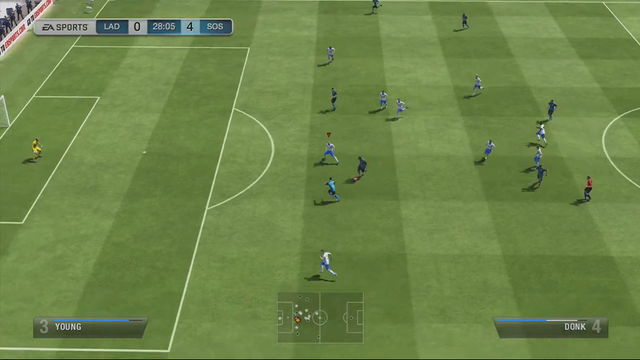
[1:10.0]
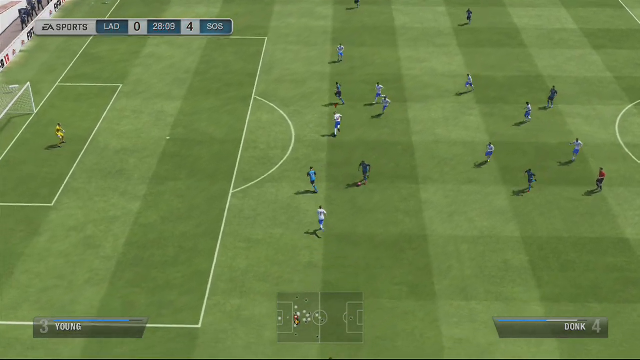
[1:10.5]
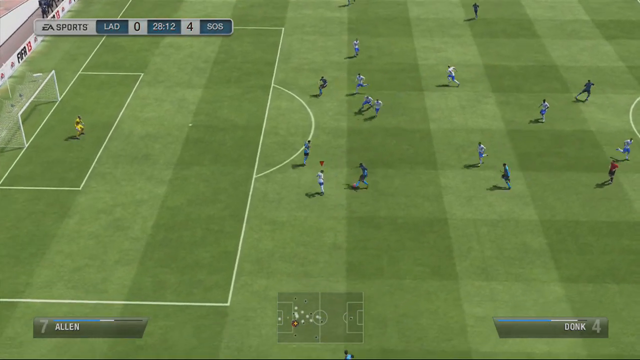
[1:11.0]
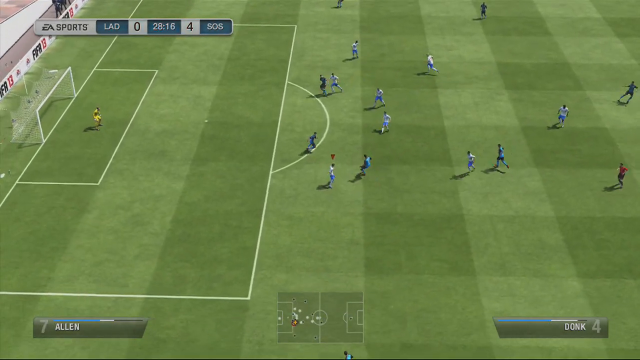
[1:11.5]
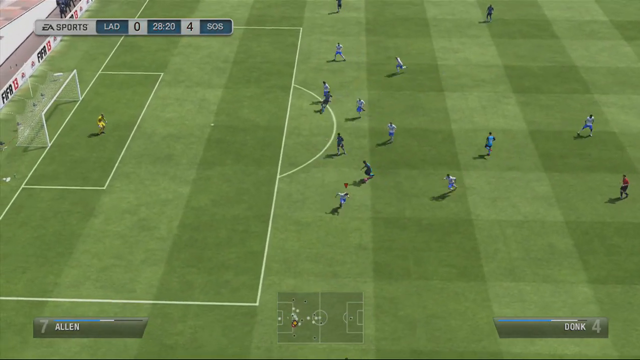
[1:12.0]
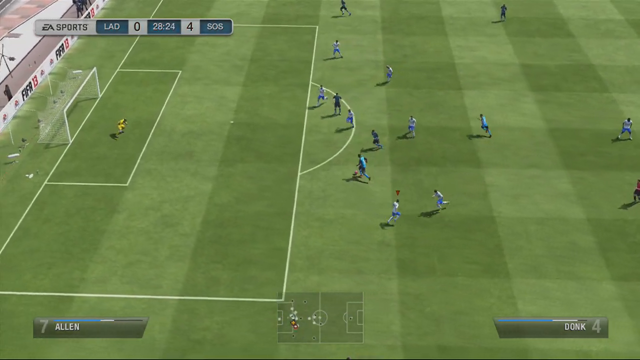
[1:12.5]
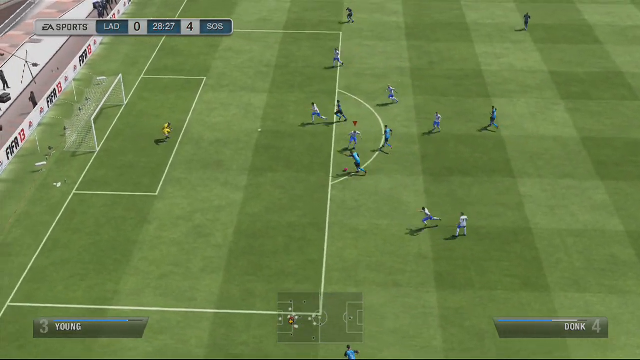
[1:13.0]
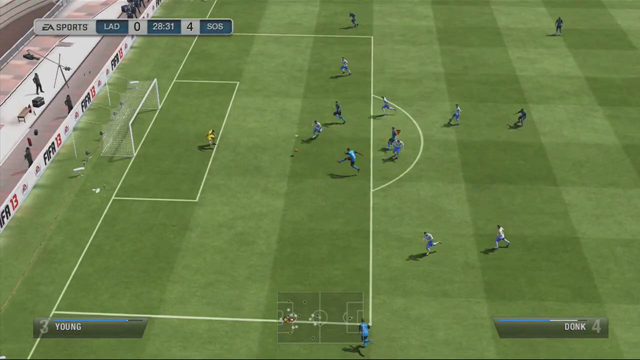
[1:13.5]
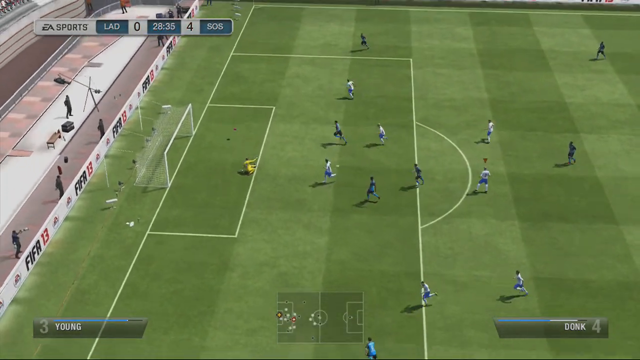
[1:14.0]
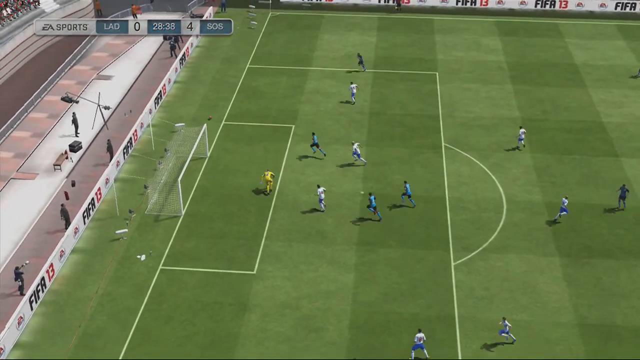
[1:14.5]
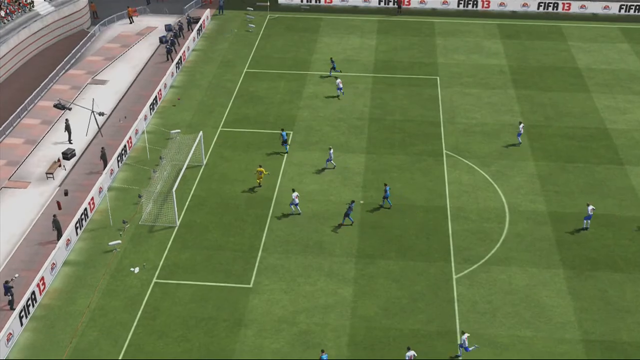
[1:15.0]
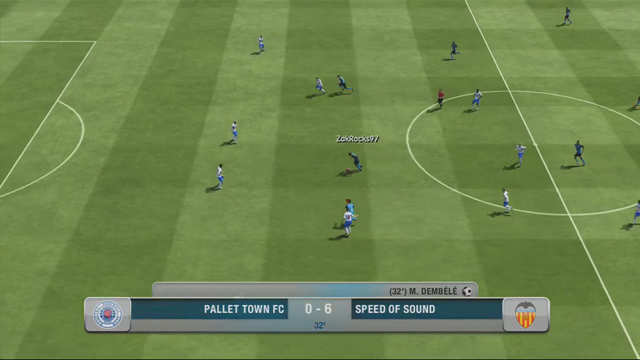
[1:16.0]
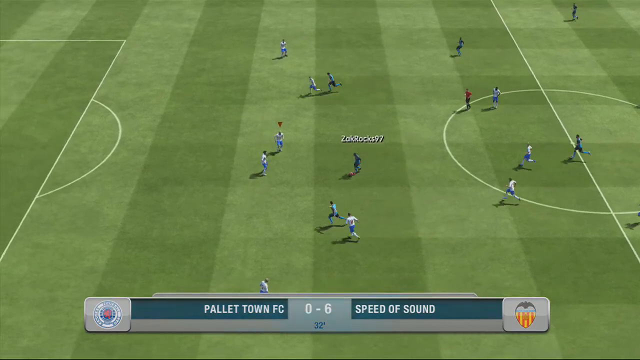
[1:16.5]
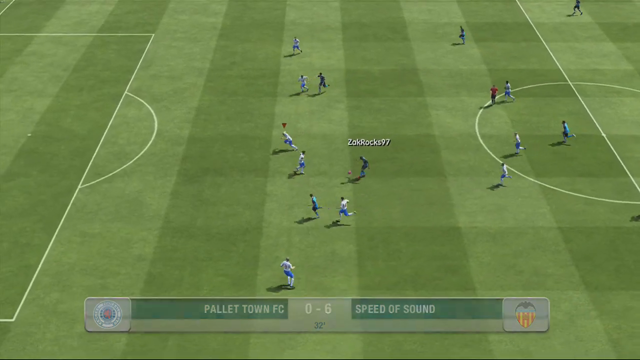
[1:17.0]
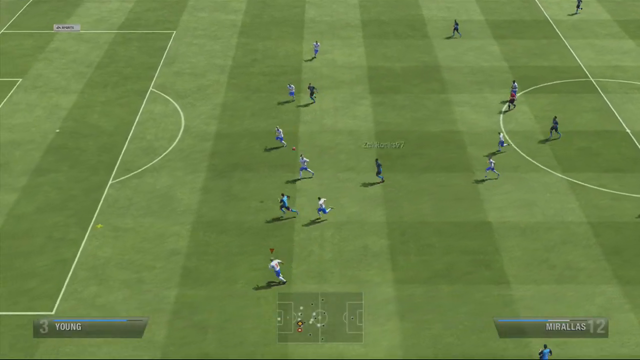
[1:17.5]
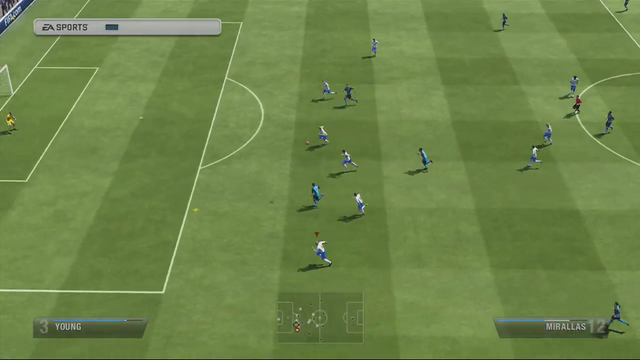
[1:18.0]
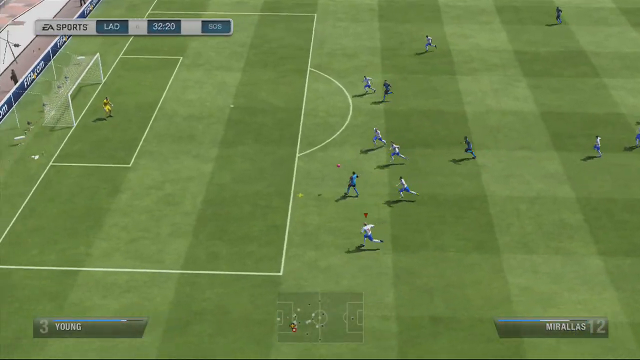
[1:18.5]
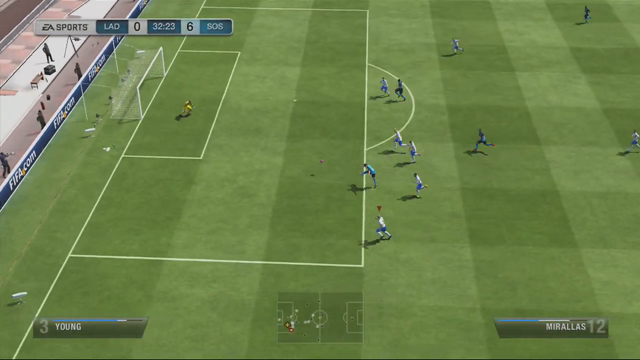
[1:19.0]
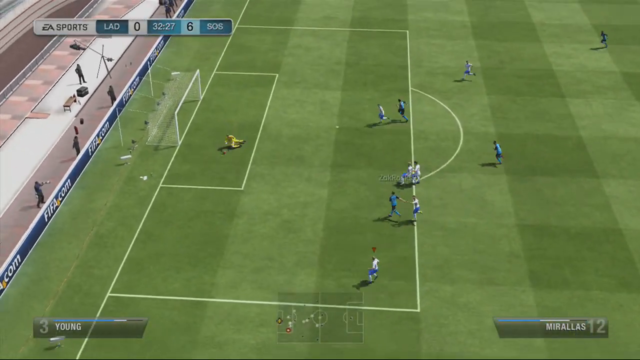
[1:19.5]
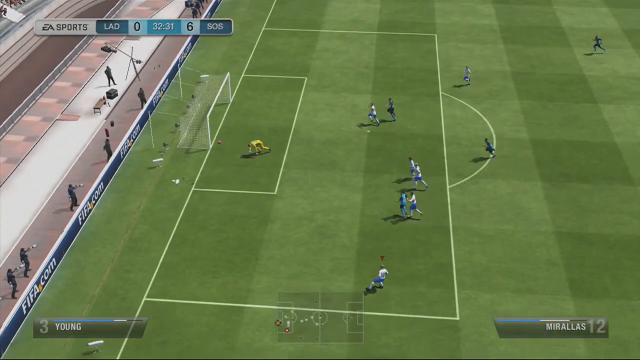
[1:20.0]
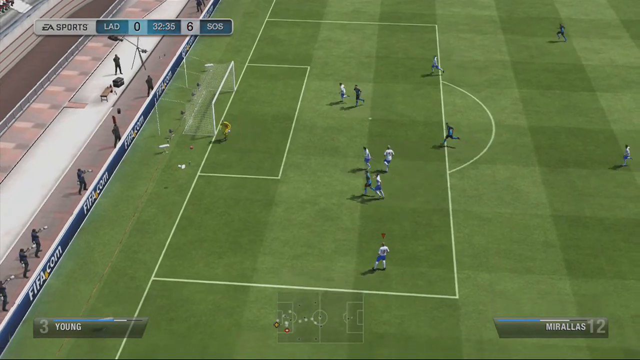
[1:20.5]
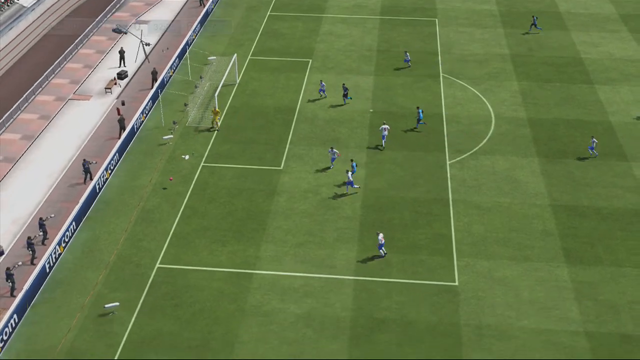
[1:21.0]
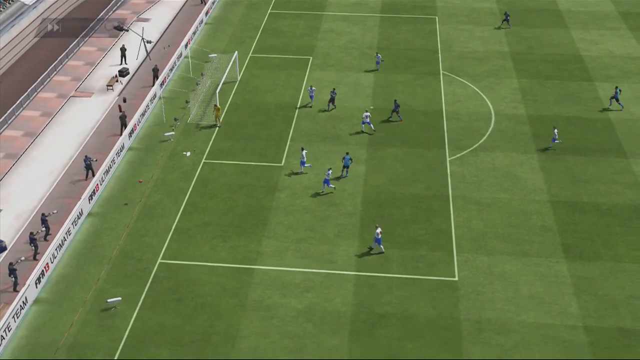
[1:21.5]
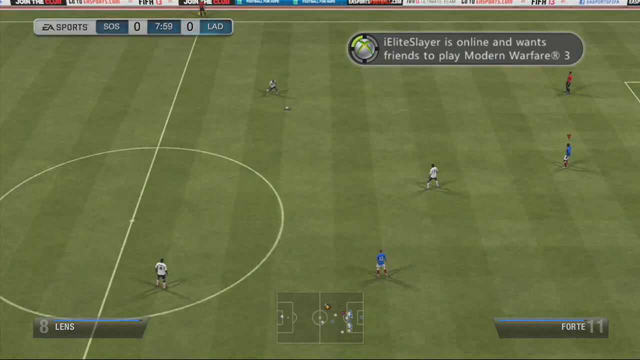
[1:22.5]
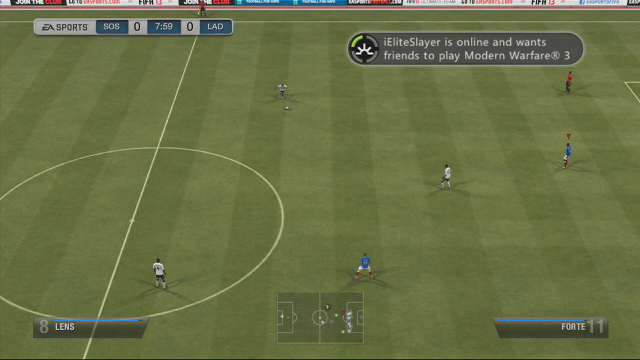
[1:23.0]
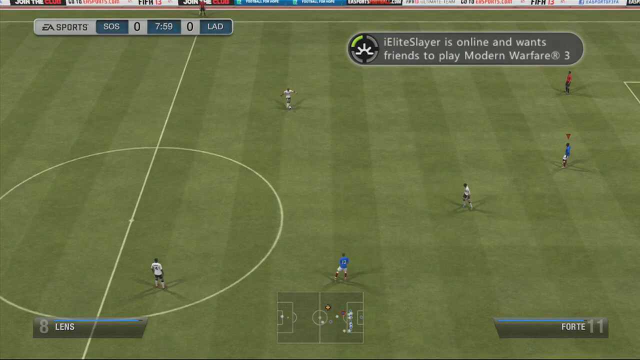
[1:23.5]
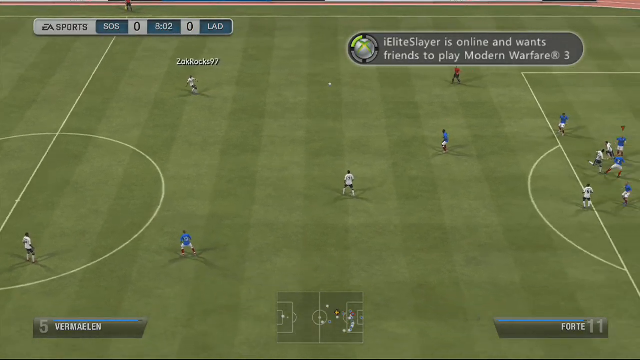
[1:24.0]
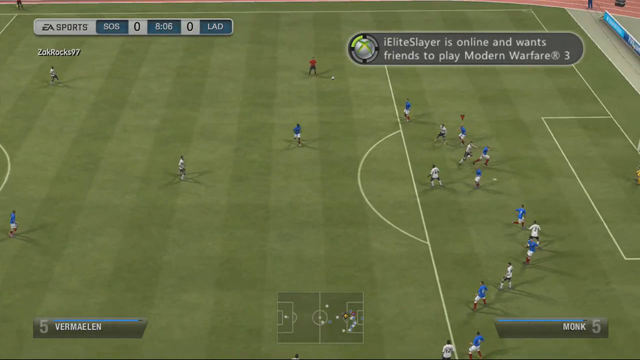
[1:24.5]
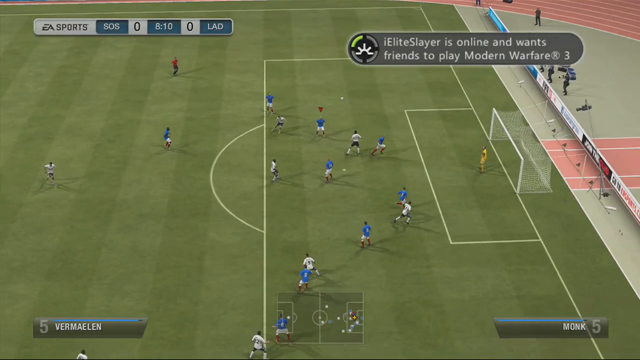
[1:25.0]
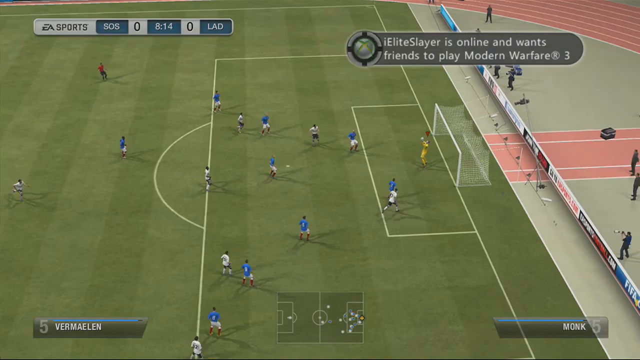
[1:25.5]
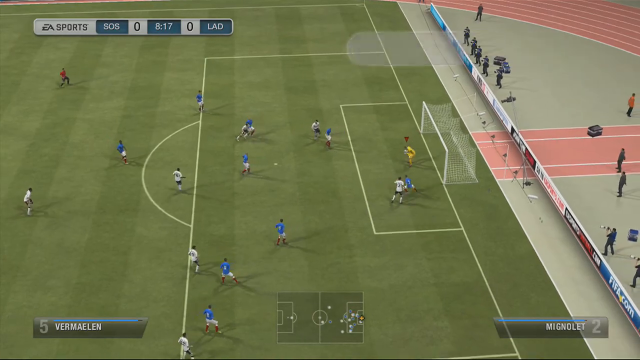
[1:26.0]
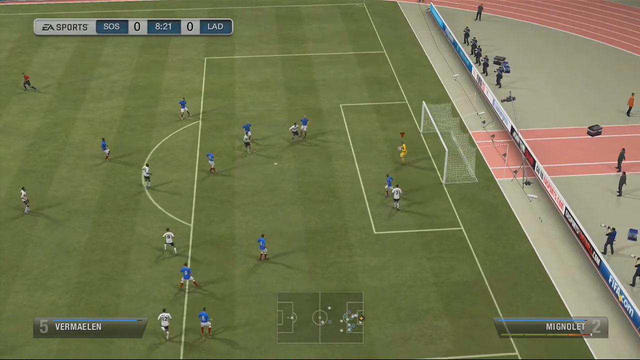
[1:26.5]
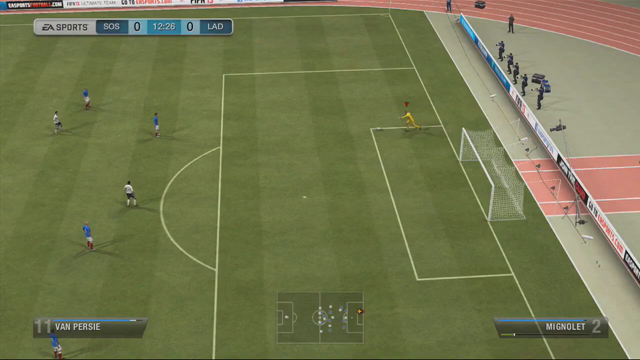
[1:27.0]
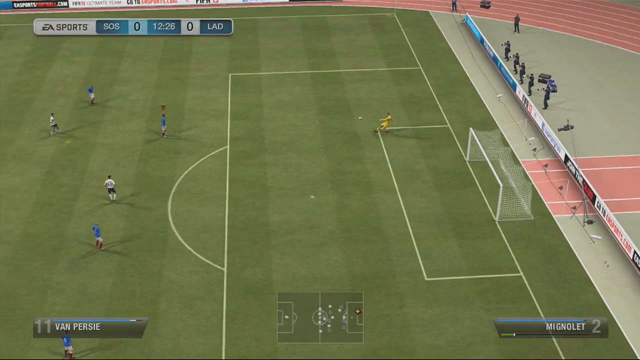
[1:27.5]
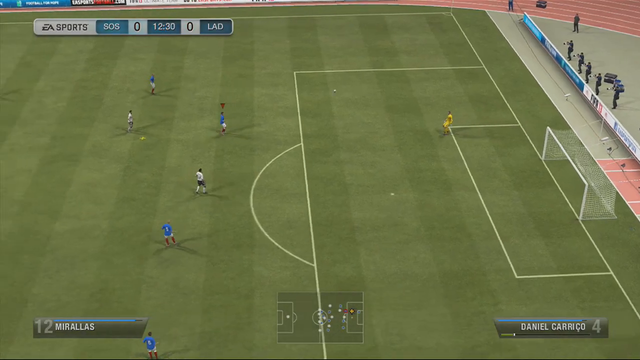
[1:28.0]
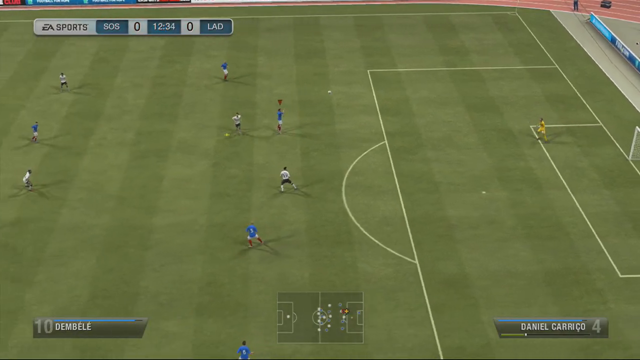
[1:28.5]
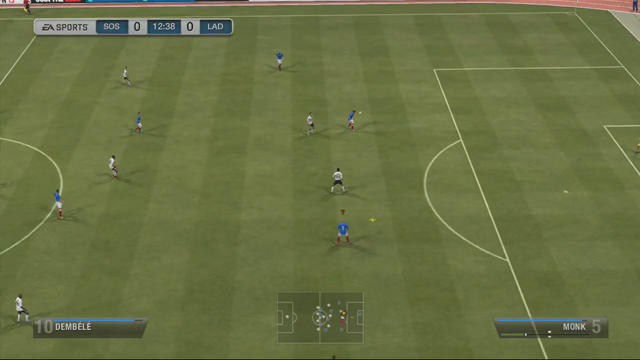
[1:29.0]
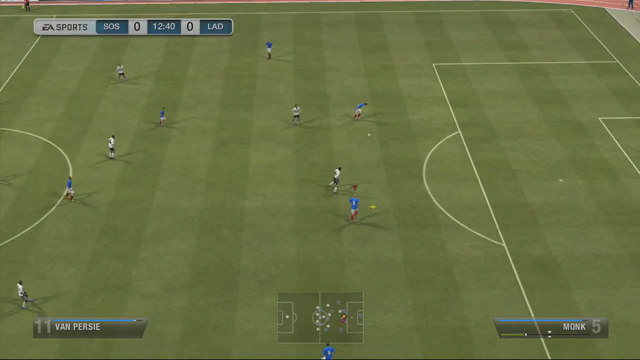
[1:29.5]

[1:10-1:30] A soccer video game is shown on a light green and dark green striped field, viewed from above so the camera looks down on the very small players. Many of them wear blue uniforms and the others wear darker blue uniforms. A player drives toward the goal, where the goalie wears a yellow uniform. He kicks the ball toward the white square with a net hanging off the back of it and misses. The screen changes to show him in the middle of the screen driving toward the goal again. Along the bottom of the screen is "PalletTown FC 0" and "six, speed of sound." In the top left corner is a small white stripe with the word "sports" written in blue; beside it, in a small blue square, is "SOS"; to the right, in a white square, is the number "0"; then "eight minutes two seconds"; then a white square with the number "0"; and to the right a smaller blue square with the letters "LAD" in white.